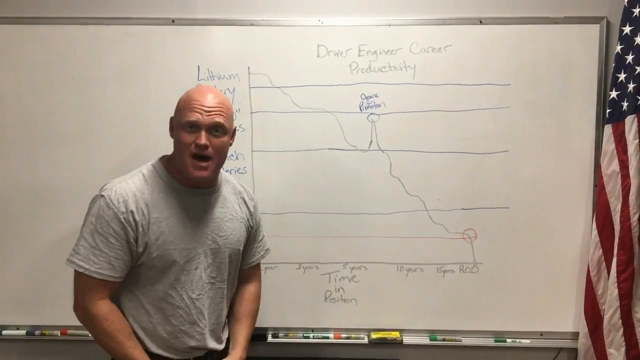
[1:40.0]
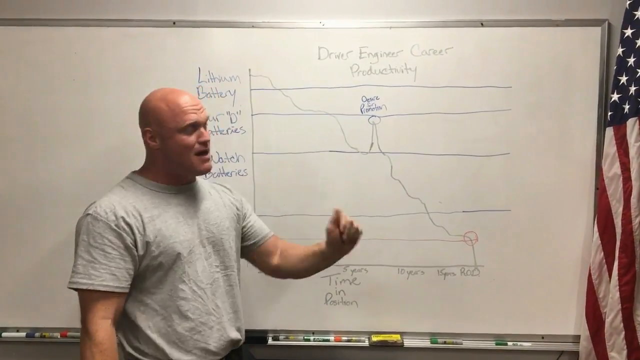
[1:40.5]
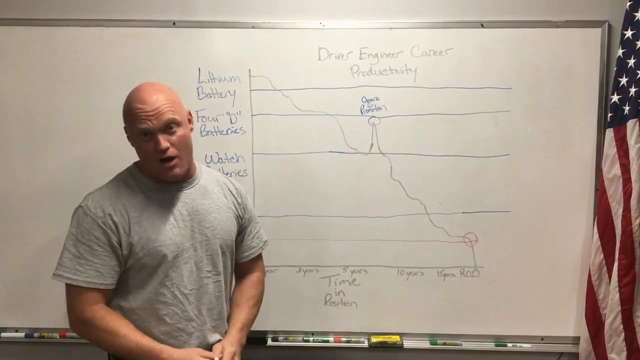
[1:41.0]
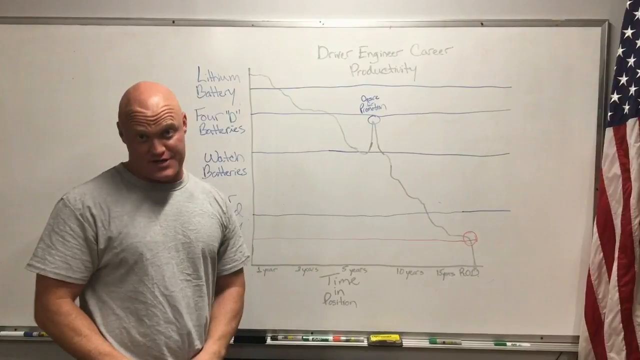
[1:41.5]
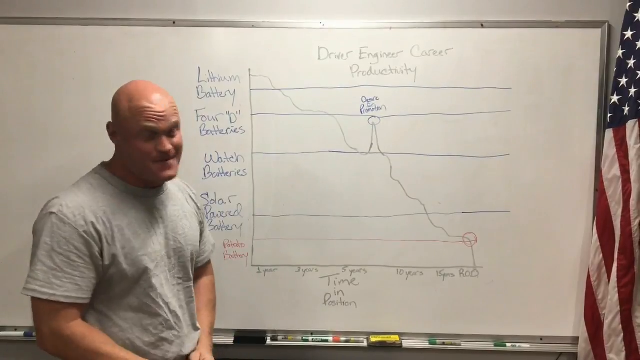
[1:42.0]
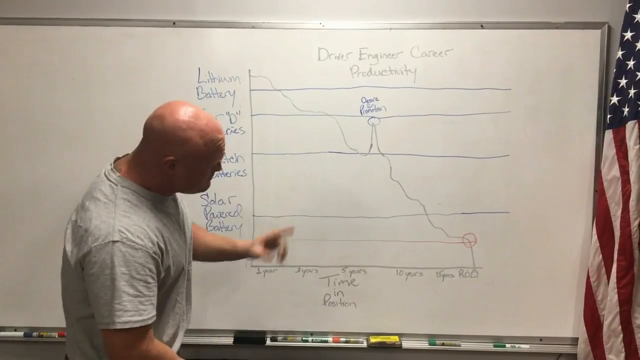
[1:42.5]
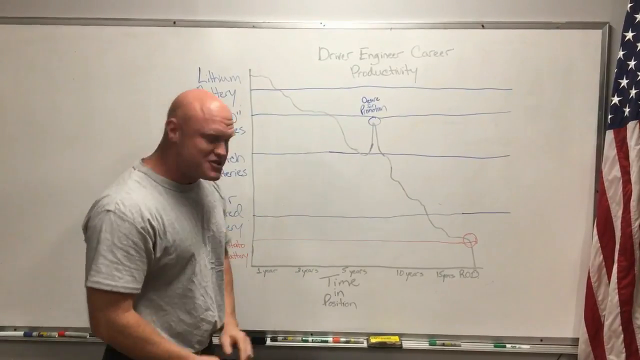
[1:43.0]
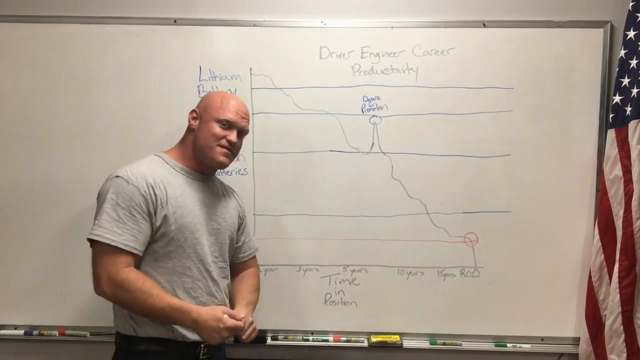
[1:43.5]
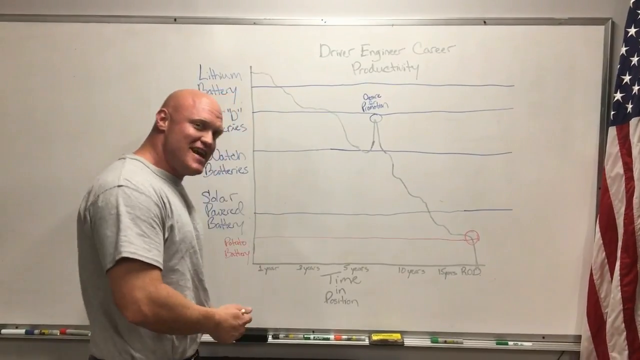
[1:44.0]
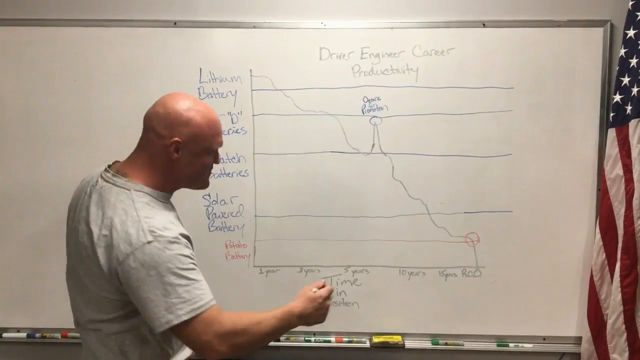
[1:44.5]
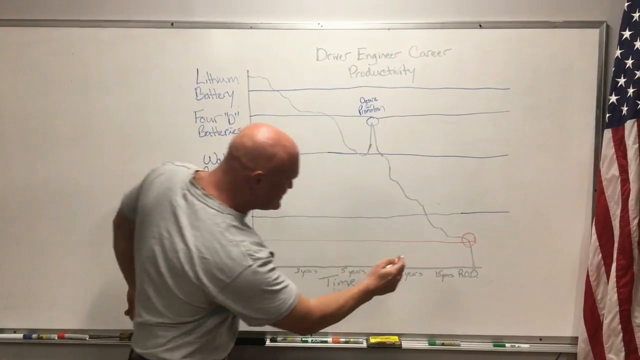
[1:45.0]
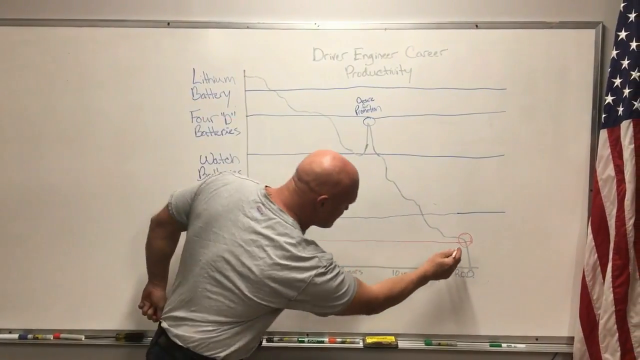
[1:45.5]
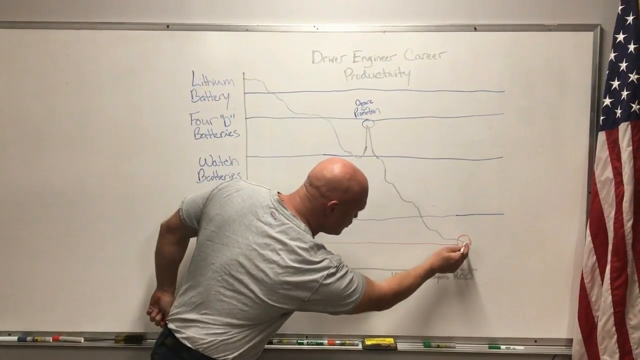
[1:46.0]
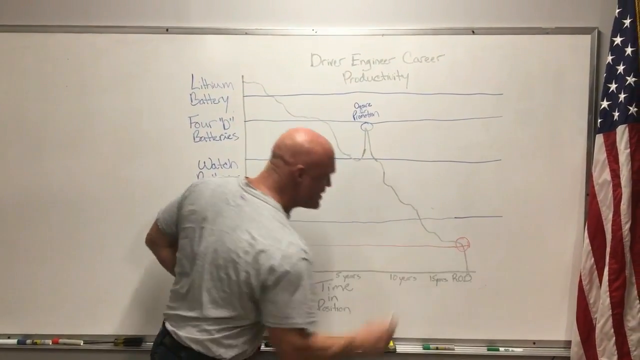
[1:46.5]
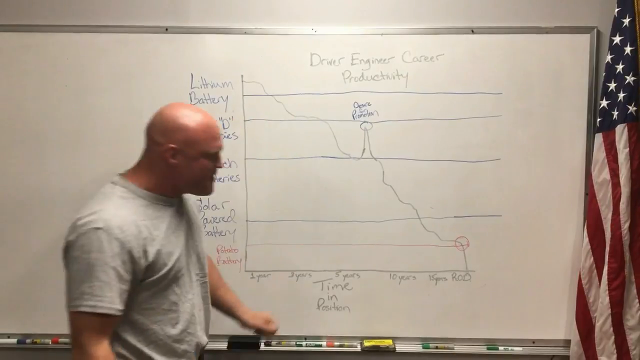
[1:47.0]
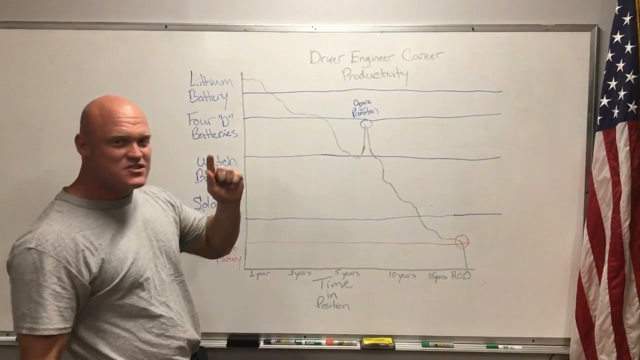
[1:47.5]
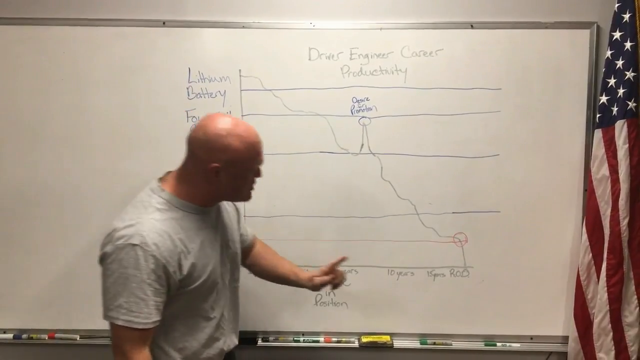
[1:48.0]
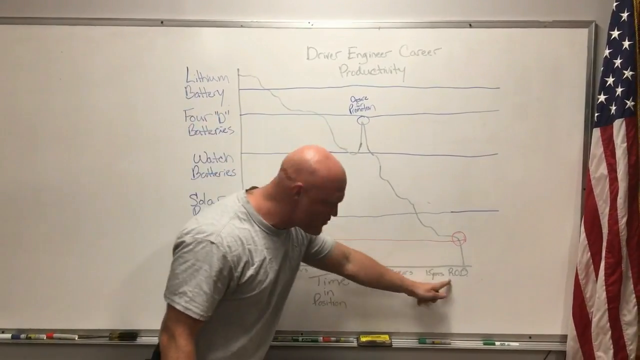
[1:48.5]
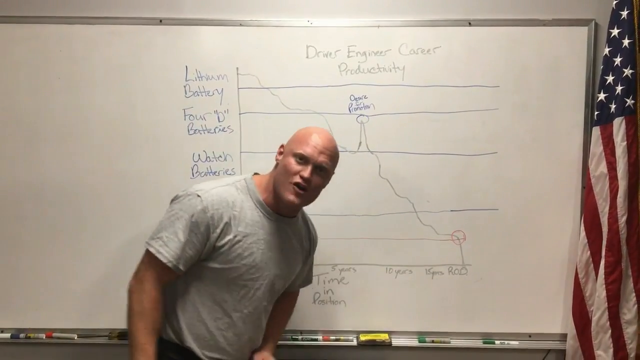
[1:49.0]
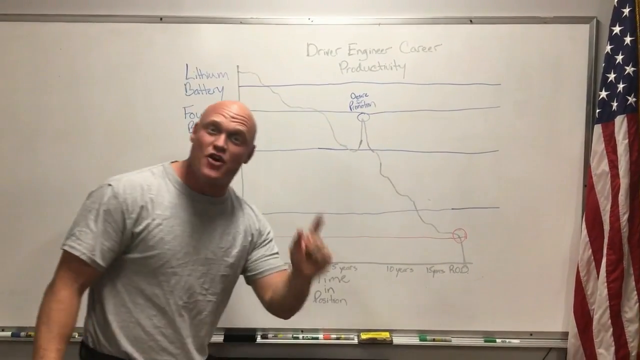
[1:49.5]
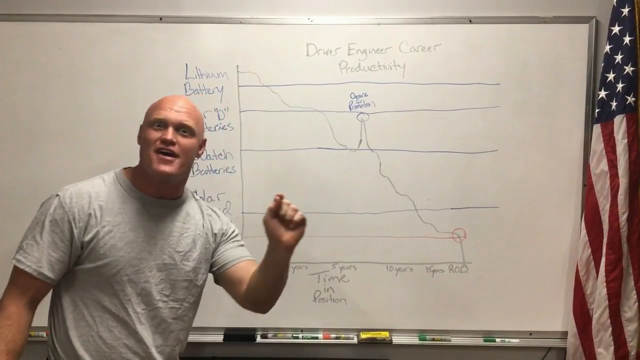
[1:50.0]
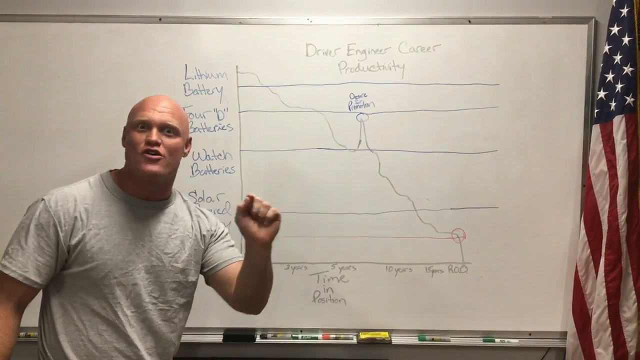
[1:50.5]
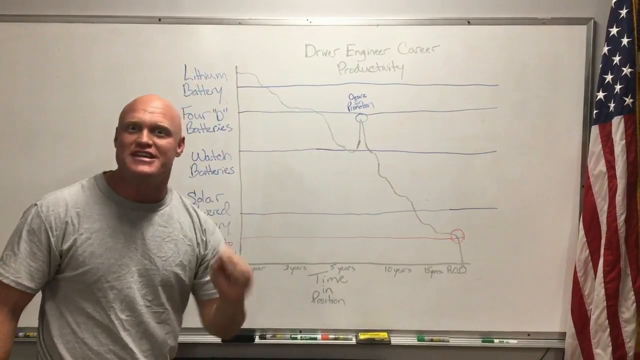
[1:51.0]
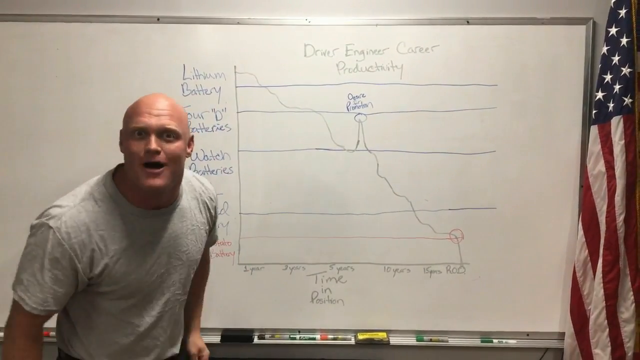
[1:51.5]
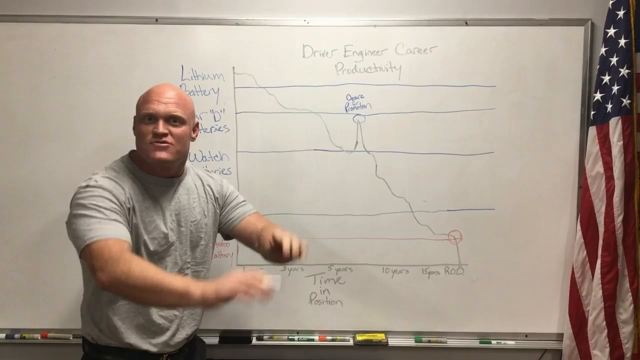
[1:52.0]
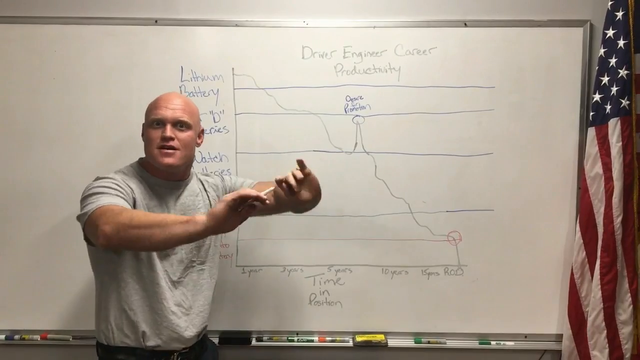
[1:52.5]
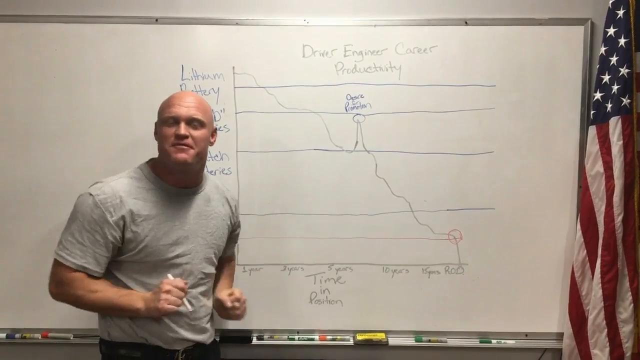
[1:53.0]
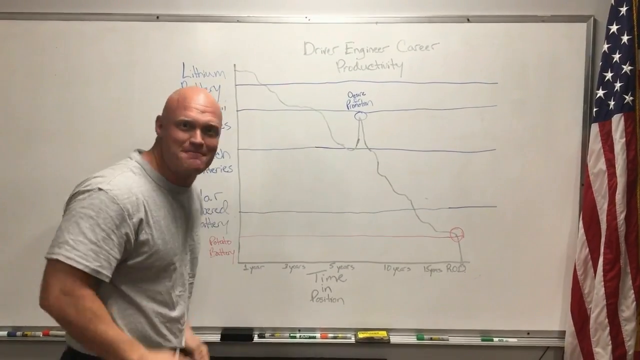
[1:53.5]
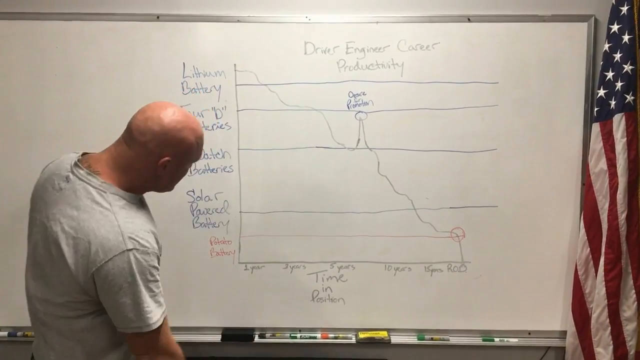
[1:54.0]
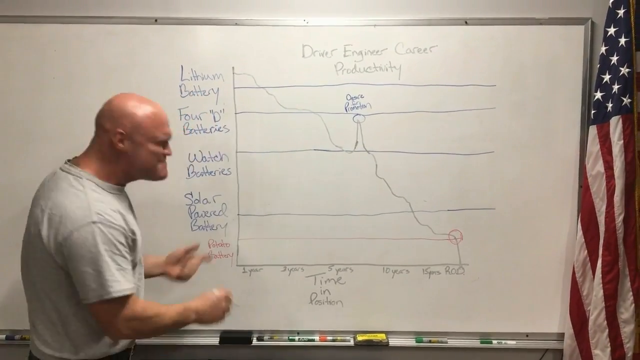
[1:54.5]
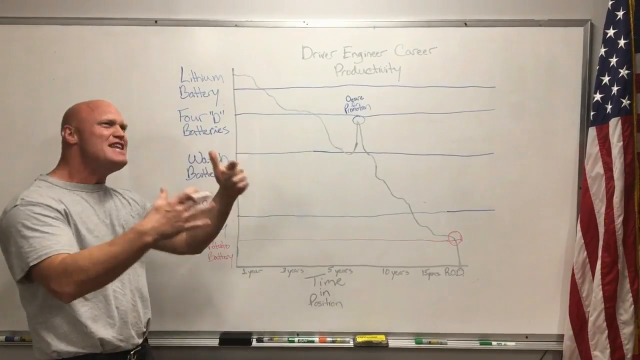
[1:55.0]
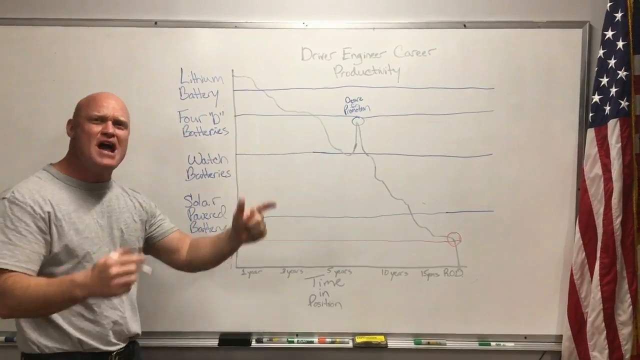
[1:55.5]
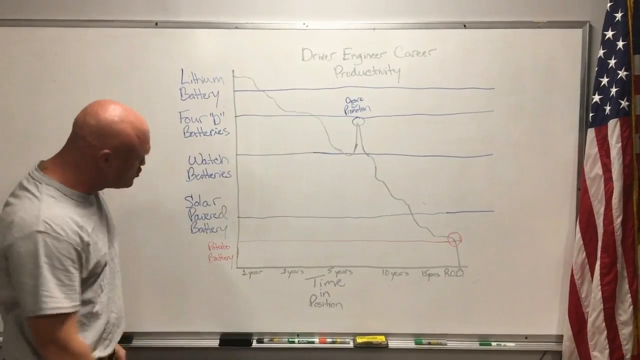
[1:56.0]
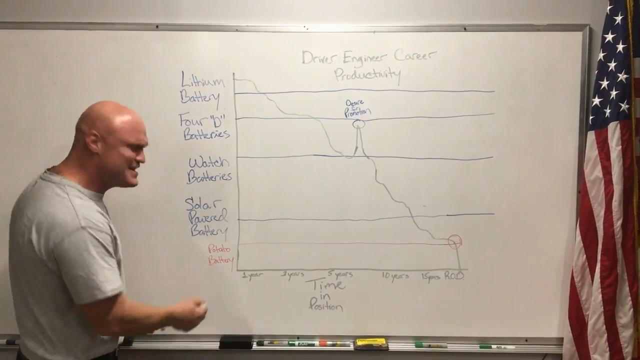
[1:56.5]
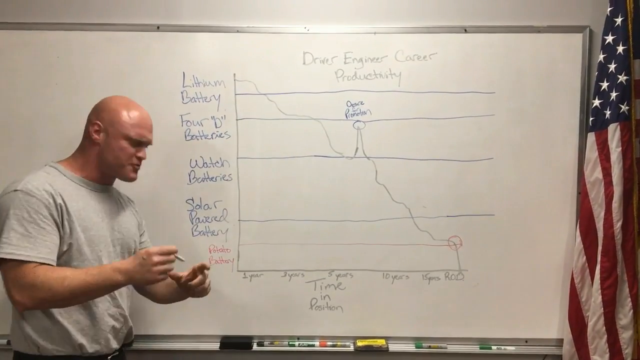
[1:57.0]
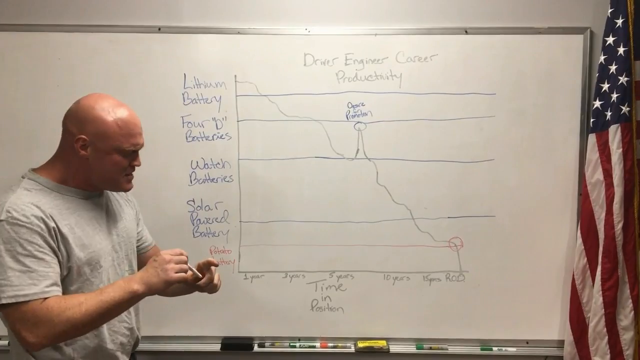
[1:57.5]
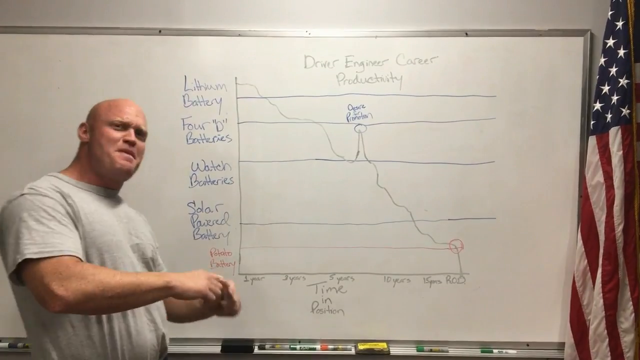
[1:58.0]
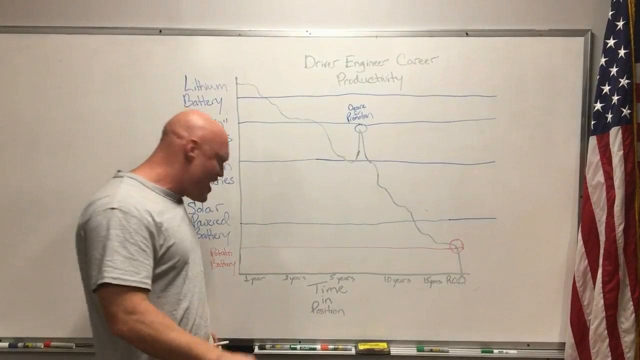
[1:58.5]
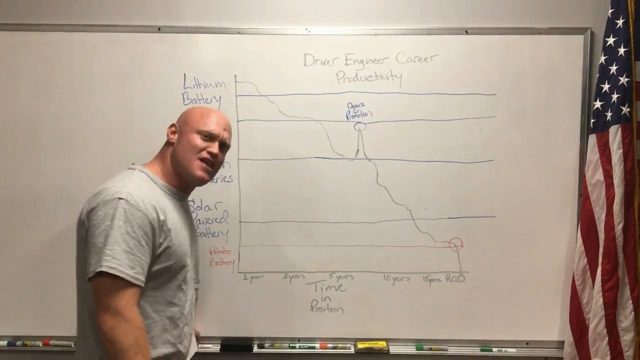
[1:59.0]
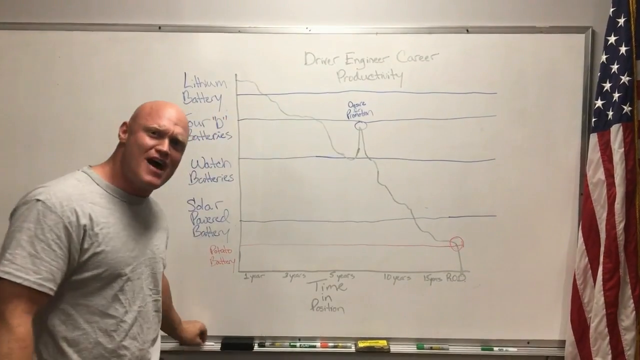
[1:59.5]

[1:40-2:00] The man appears to be in the same position to the left of the graph, which is written in blue, red and black marker. Lithium batteries, 4D batteries, watch batteries and solar batteries are written on the left, and 1 year, 3 years, 5 years, 10 years and 15 years along the bottom. A line starts from lithium batteries and goes down until it peaks in the middle, then continues downward. An American flag is to his right. He speaks very passionately. He has a grey shirt and Caucasian skin. He points upward, then downward, then at the camera, goes wide-eyed and says something into the camera. He throws both hands in front of him and looks back, then moves his hands in a circular motion, looking at the board and then back at the camera. He has high energy. The board is outlined in a silver frame.